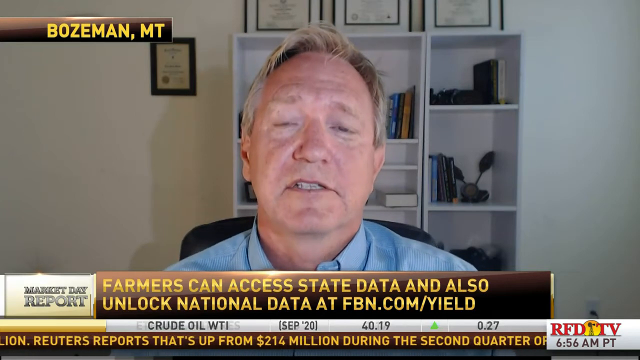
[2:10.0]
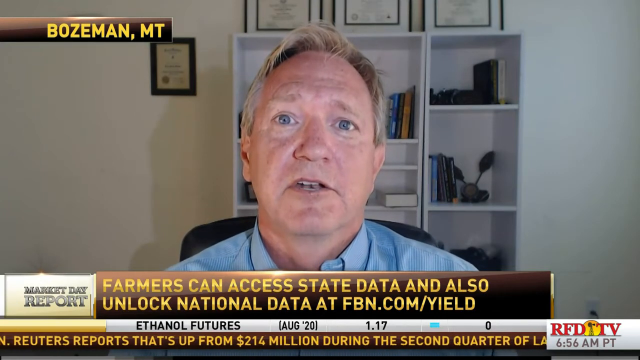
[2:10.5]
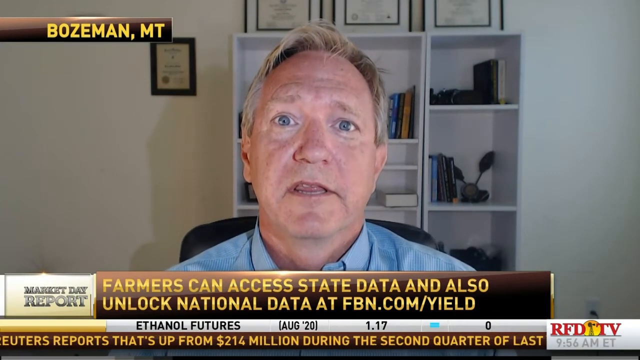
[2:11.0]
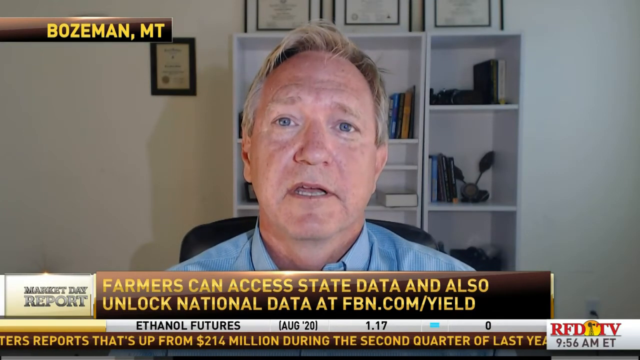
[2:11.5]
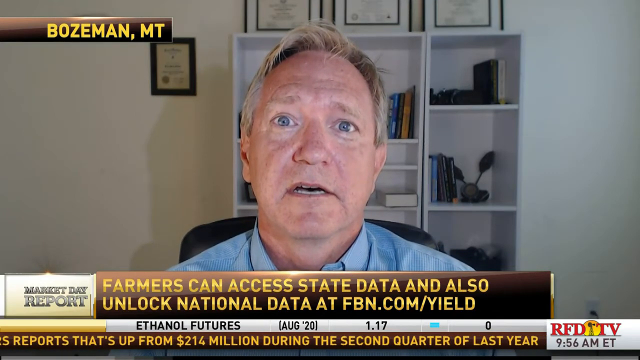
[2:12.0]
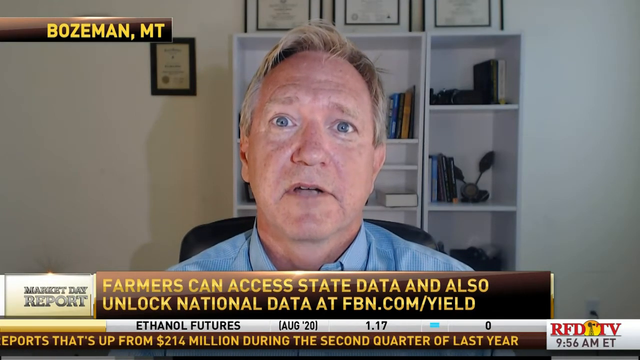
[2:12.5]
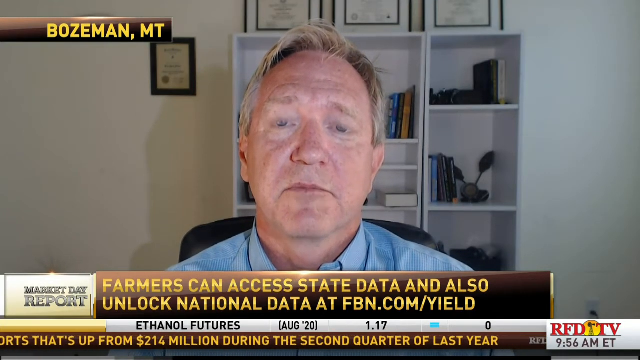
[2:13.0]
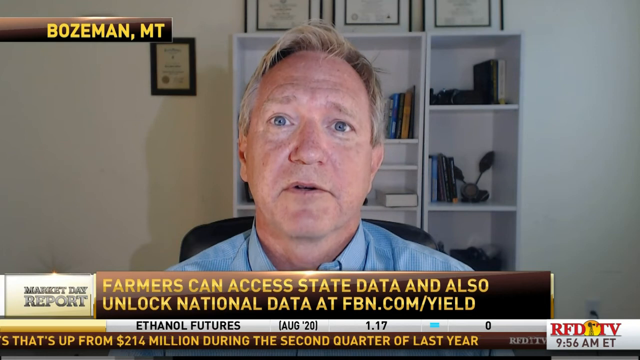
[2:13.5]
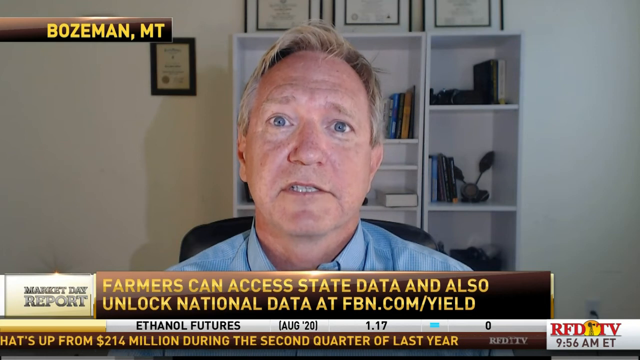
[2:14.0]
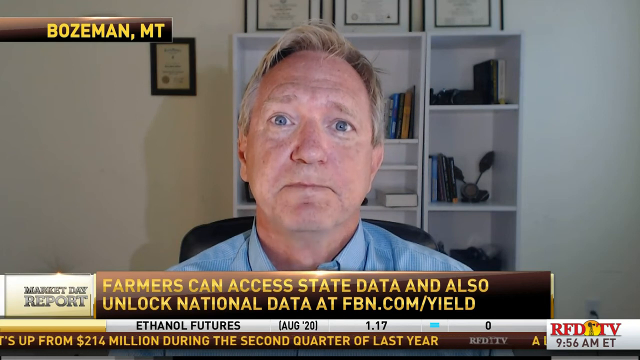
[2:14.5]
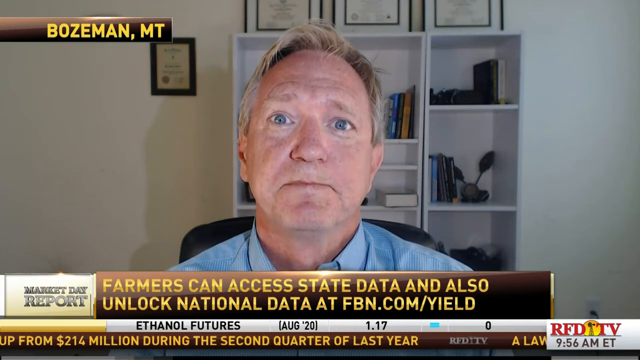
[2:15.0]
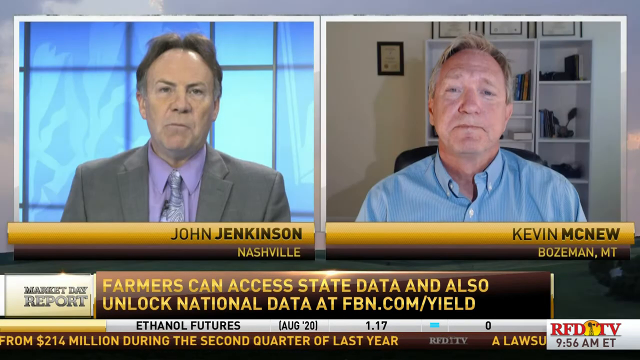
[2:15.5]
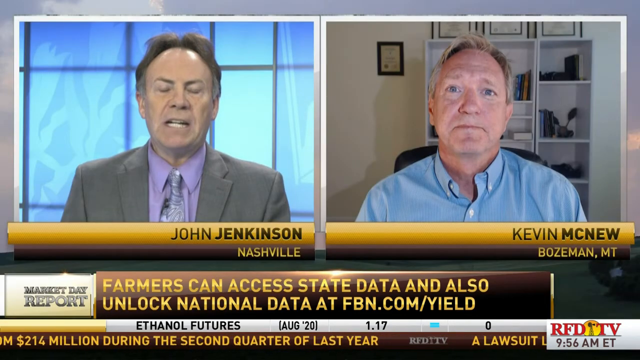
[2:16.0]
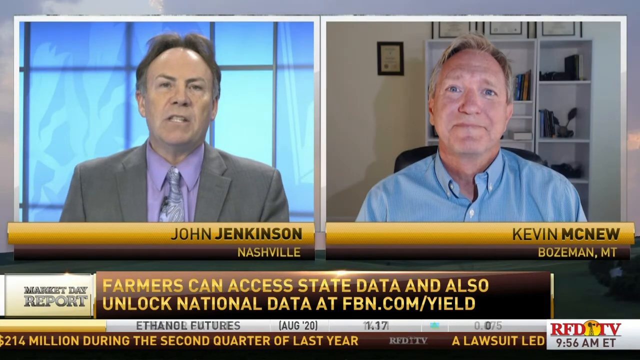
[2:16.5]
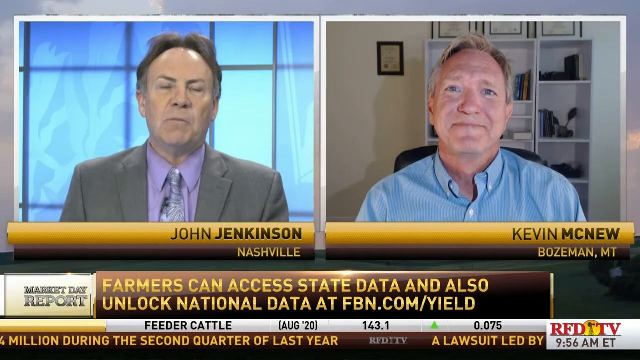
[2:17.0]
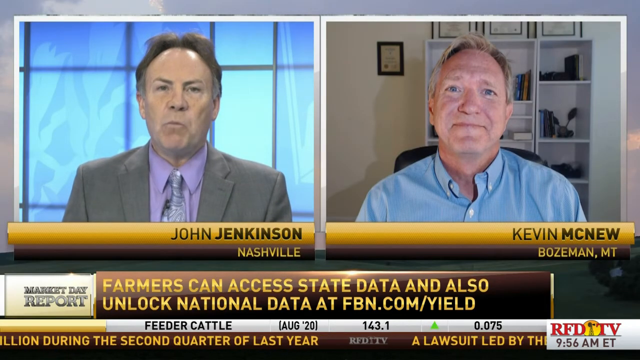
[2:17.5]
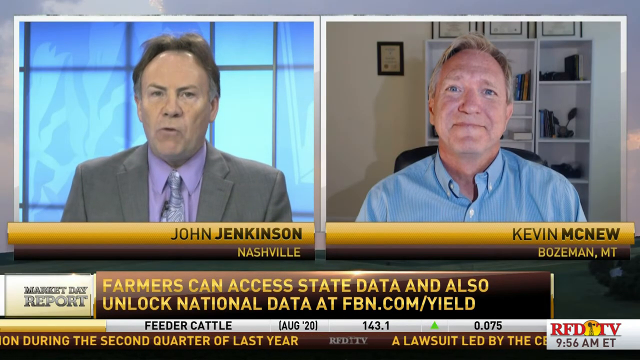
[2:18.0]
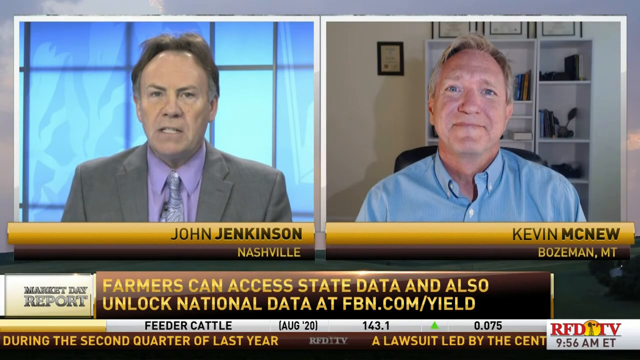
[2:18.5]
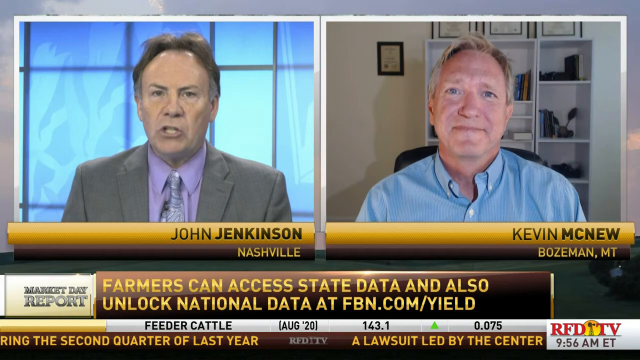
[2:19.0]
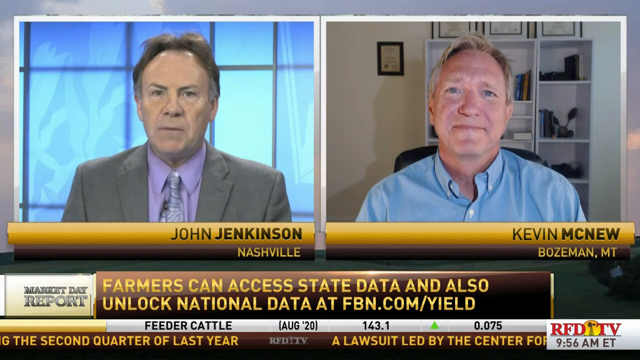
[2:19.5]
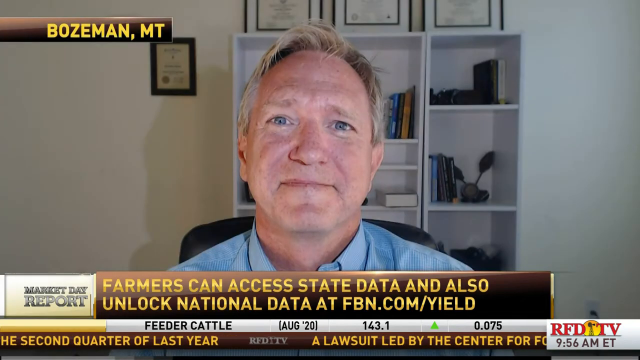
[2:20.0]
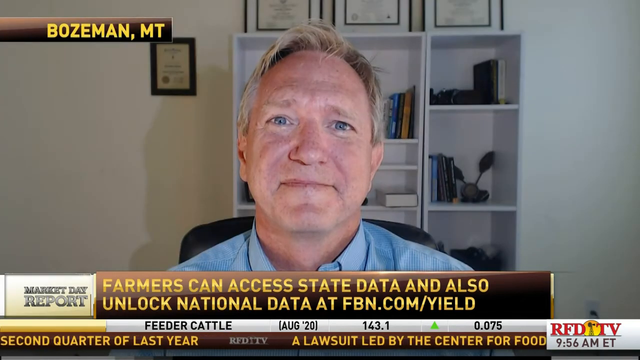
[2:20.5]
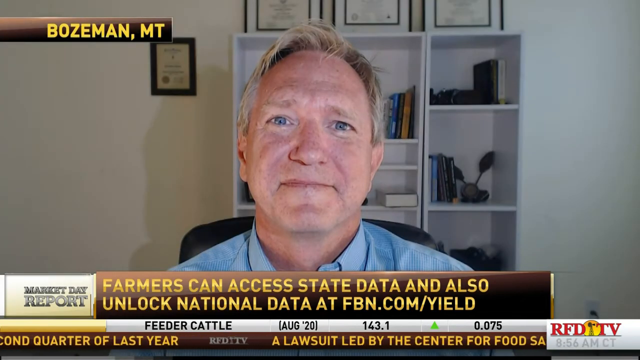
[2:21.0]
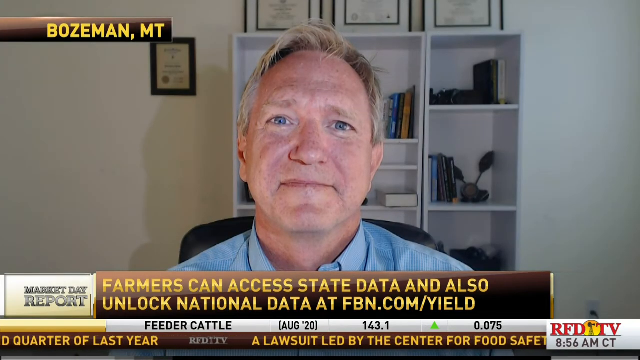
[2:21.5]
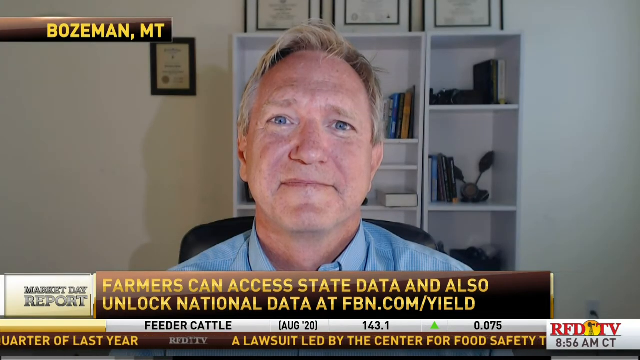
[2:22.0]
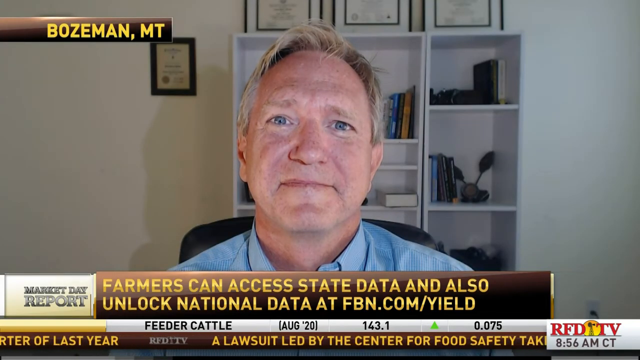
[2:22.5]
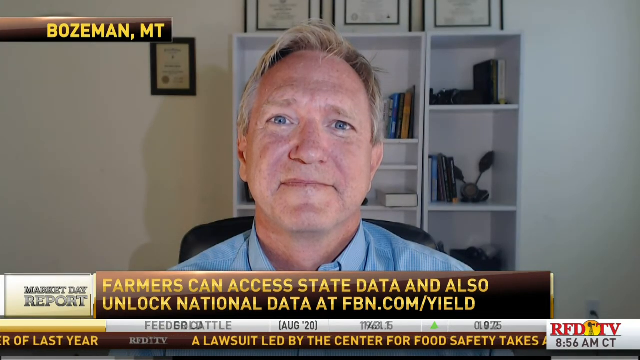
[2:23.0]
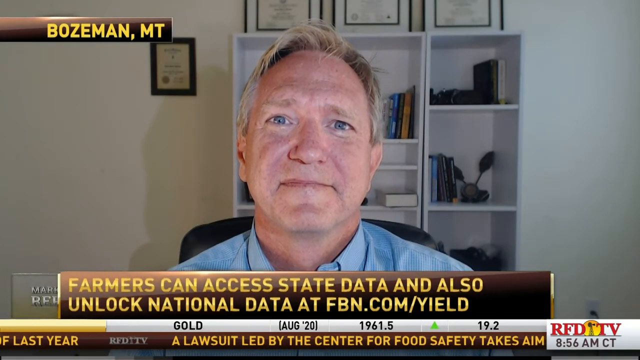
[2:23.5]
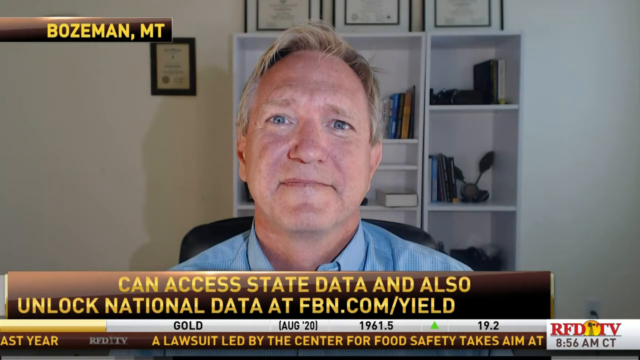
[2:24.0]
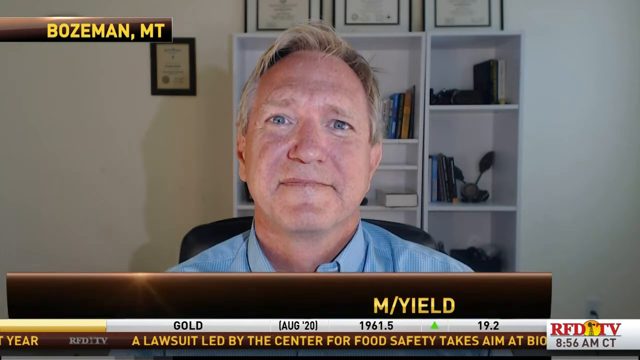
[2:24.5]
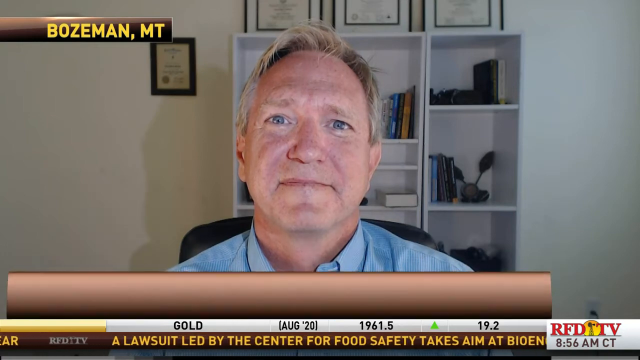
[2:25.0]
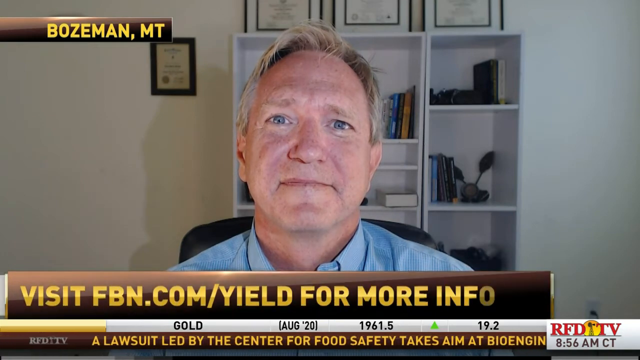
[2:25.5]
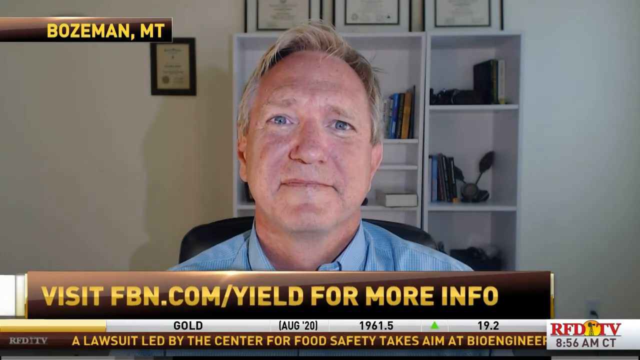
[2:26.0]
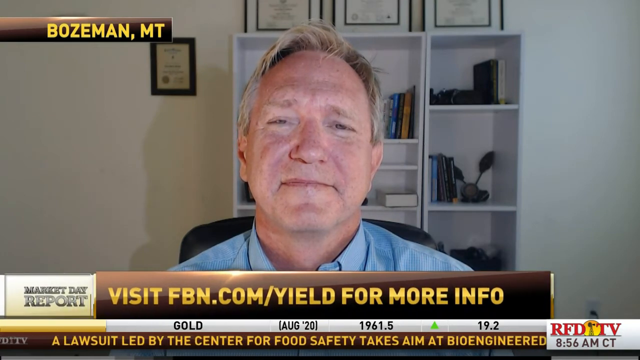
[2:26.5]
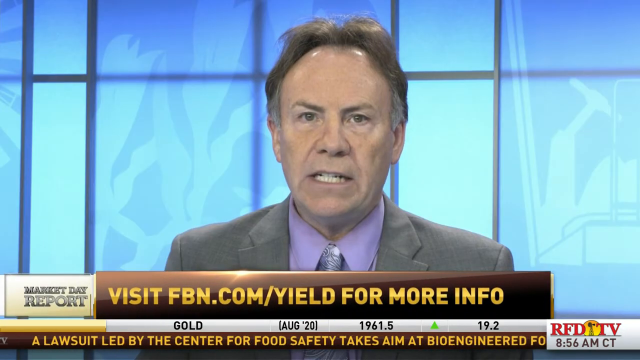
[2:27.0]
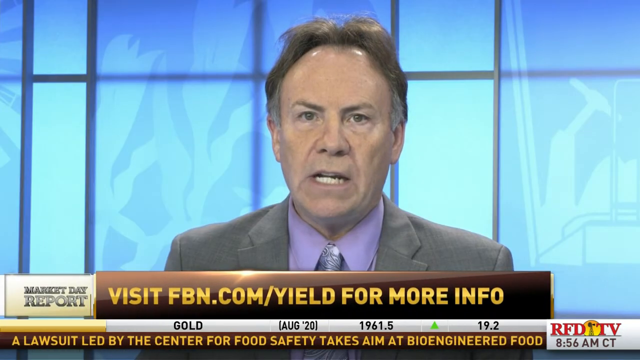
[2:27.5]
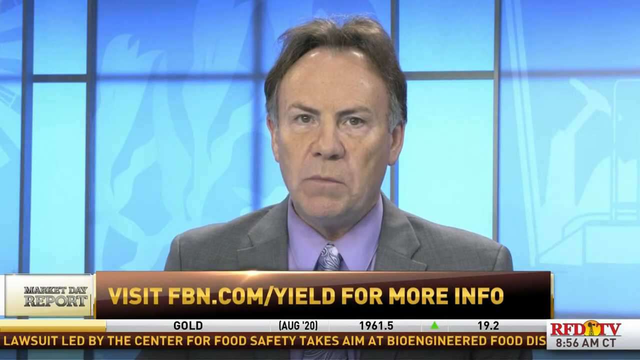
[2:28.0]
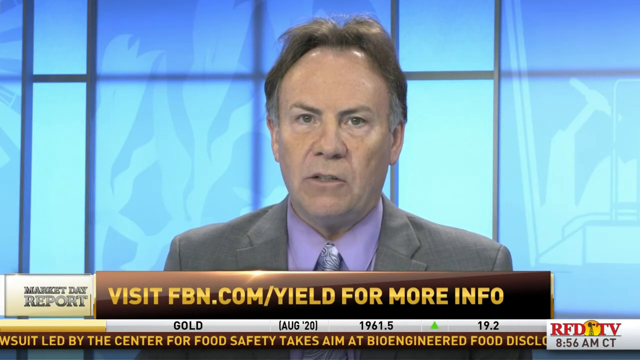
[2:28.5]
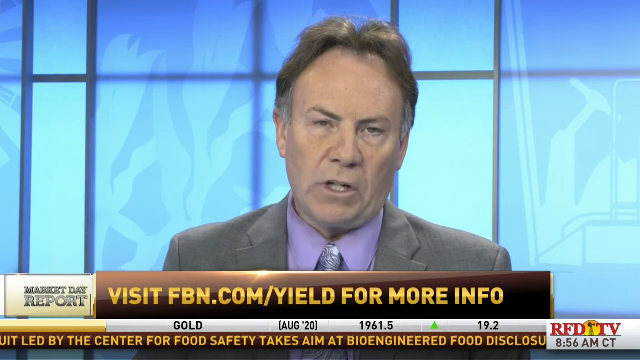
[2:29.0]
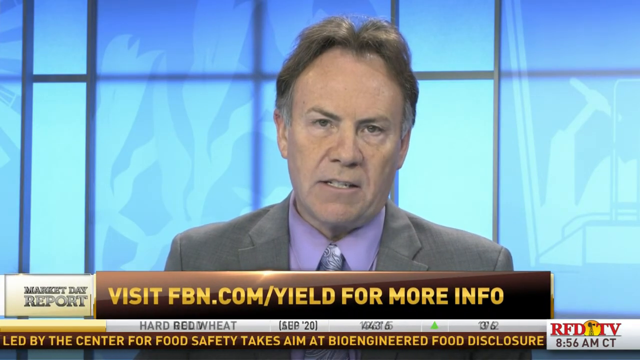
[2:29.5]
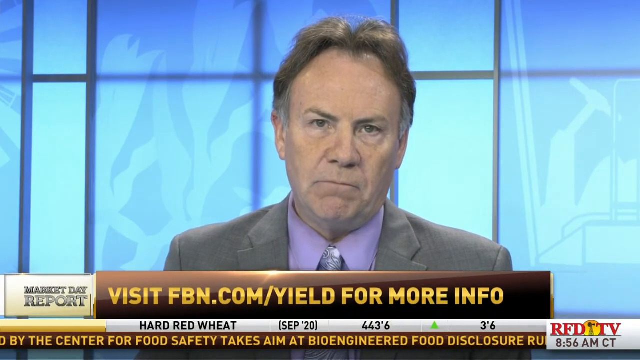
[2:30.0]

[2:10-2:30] John Jenkins from Nashville, a white man with dark hair wearing a tie, has a blue design behind him. He interviews Kevin McNeill from Bozeman MT, who has a shelf behind him with three awards on top. Tractors are shown cultivating and planting crops, and the planted crops appear. The tractor is green with some yellow design and four big tires; the planter behind it has smaller tires carrying the forks used for planting.